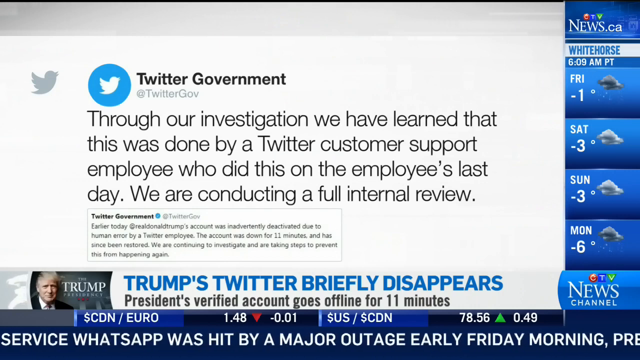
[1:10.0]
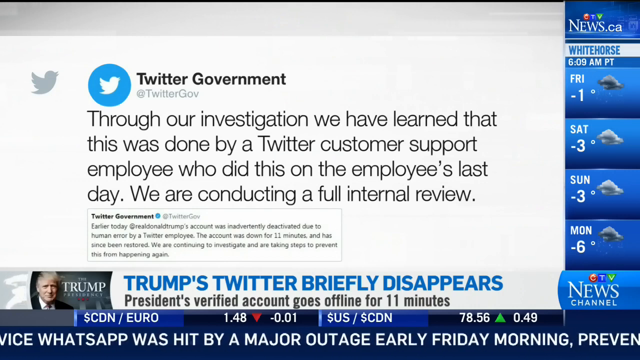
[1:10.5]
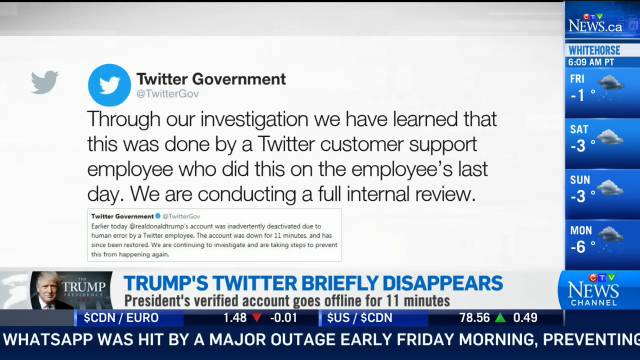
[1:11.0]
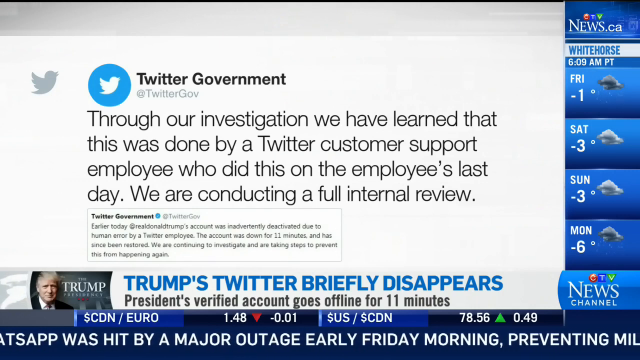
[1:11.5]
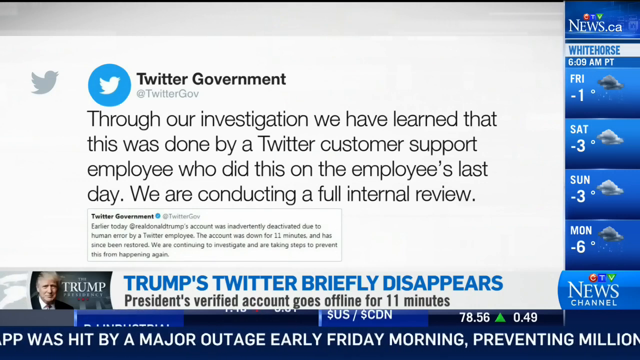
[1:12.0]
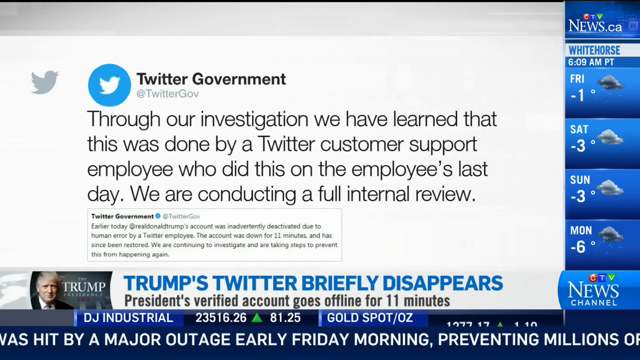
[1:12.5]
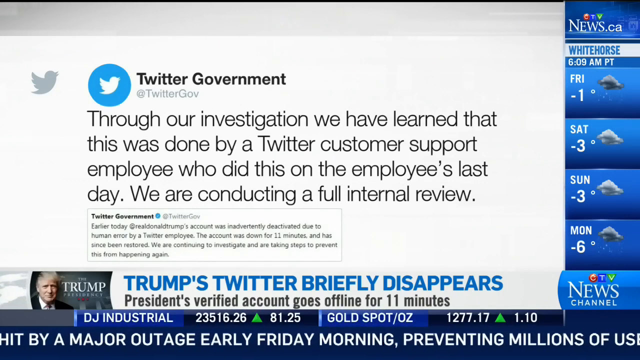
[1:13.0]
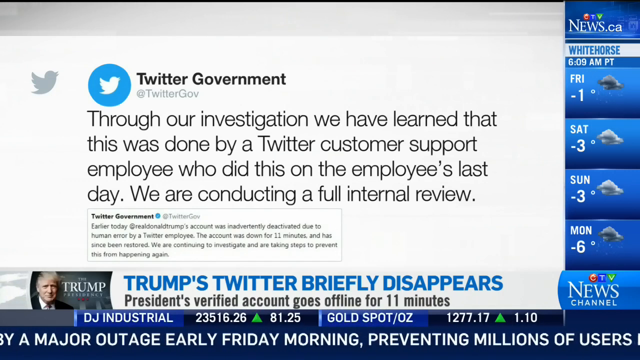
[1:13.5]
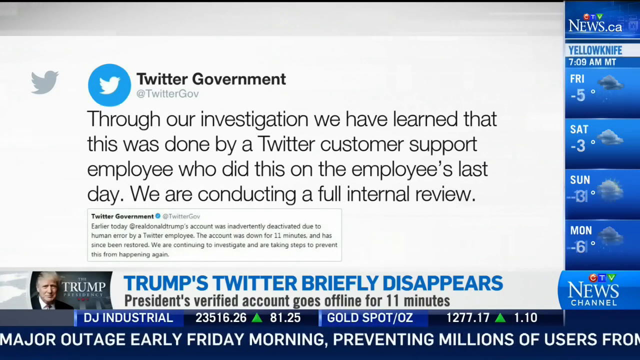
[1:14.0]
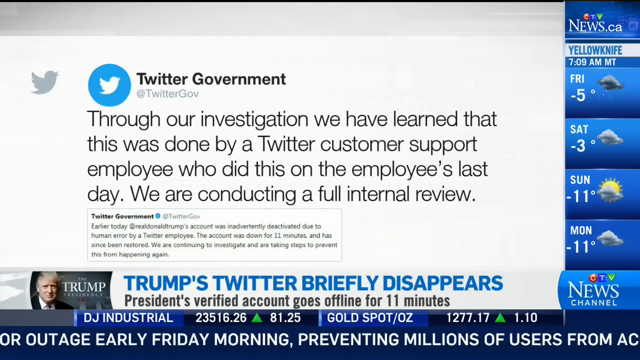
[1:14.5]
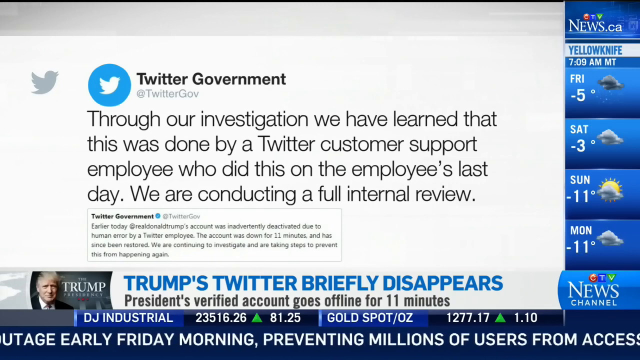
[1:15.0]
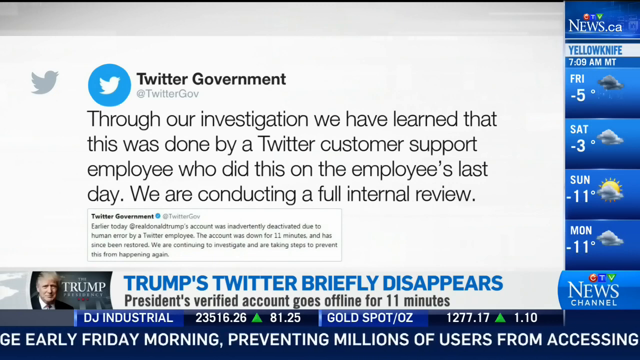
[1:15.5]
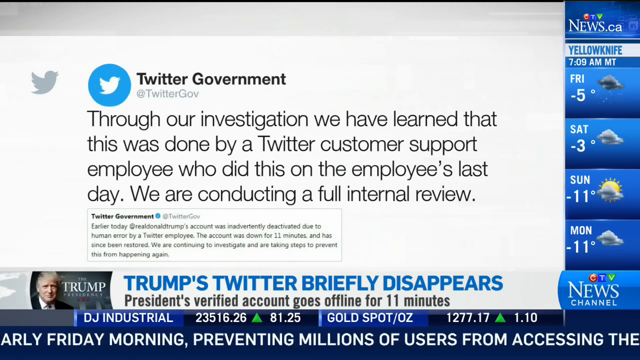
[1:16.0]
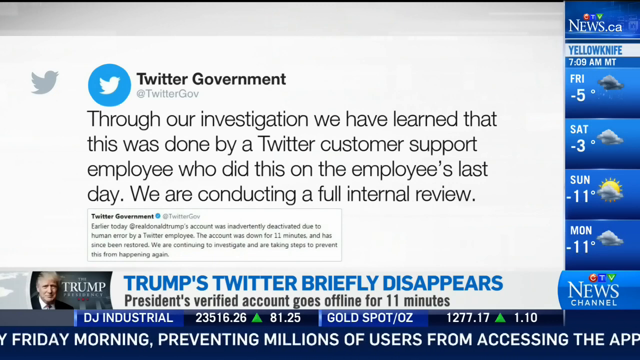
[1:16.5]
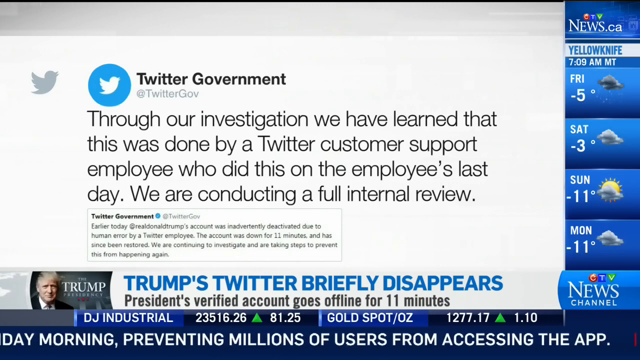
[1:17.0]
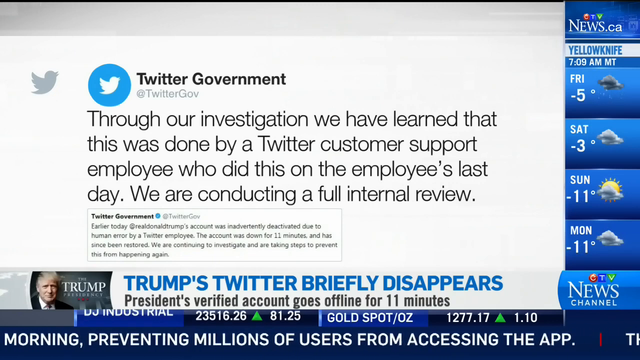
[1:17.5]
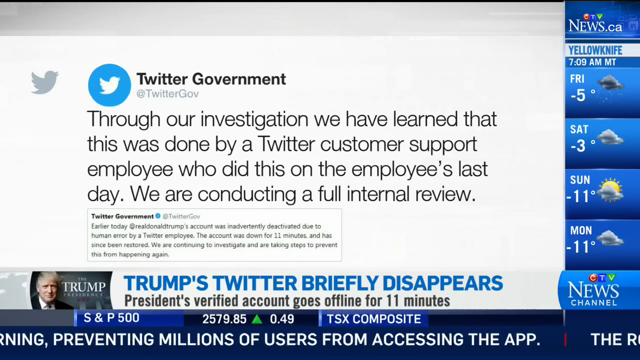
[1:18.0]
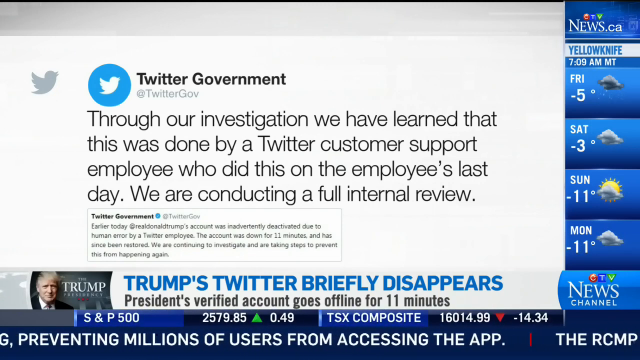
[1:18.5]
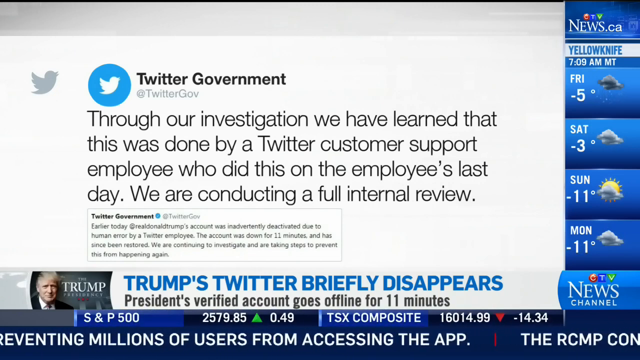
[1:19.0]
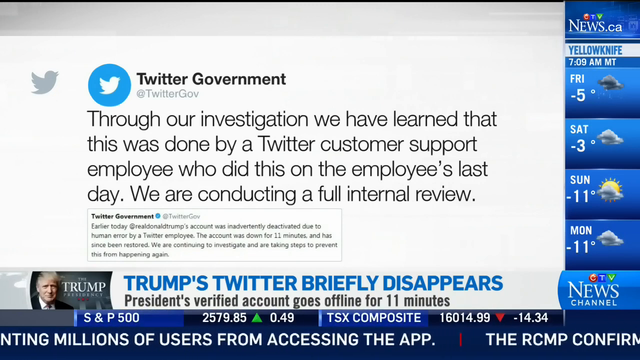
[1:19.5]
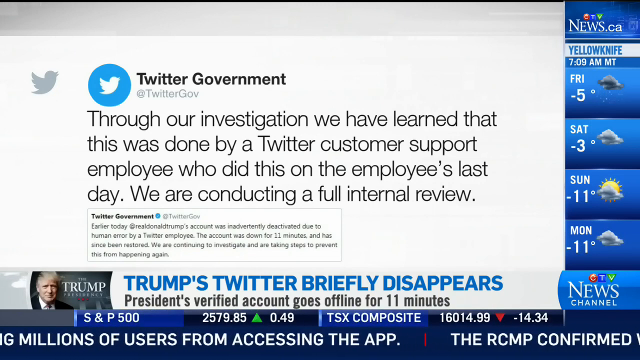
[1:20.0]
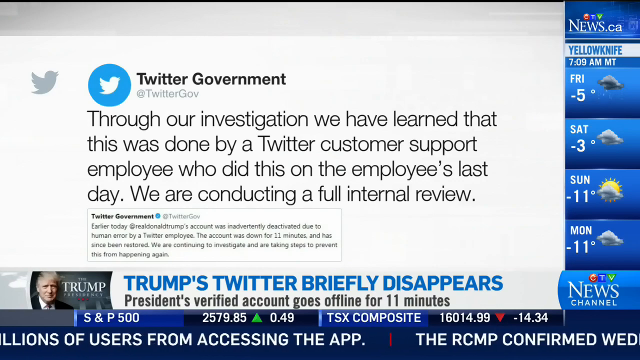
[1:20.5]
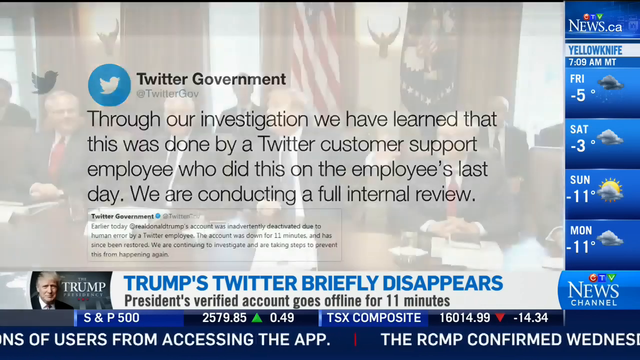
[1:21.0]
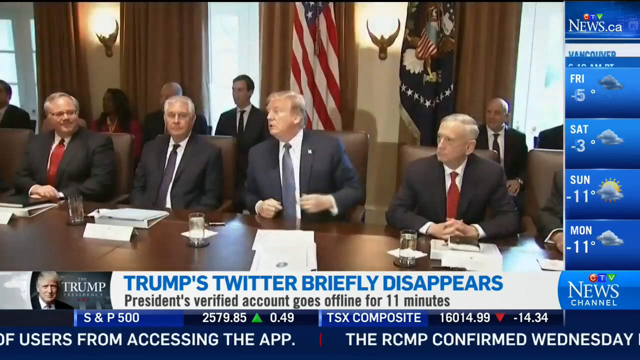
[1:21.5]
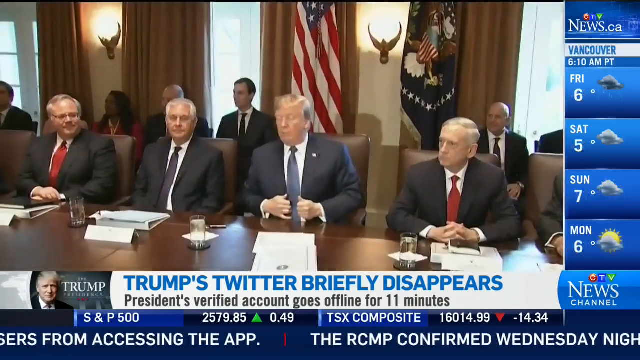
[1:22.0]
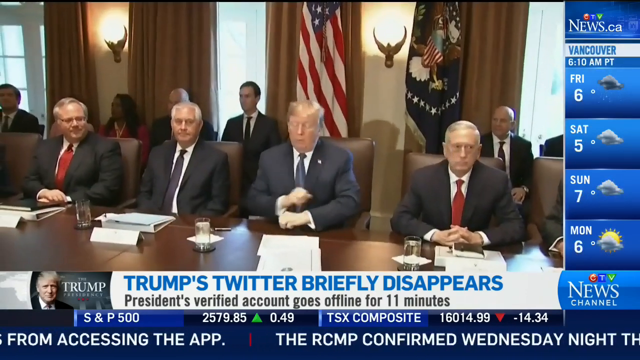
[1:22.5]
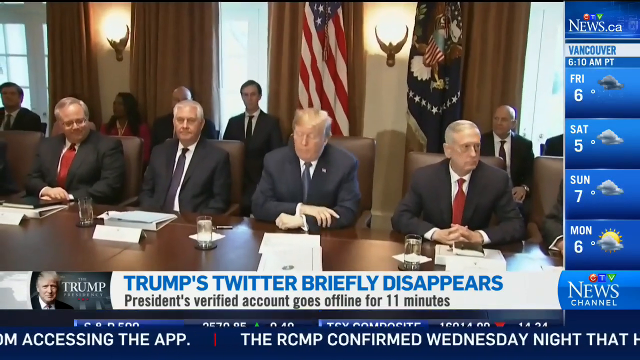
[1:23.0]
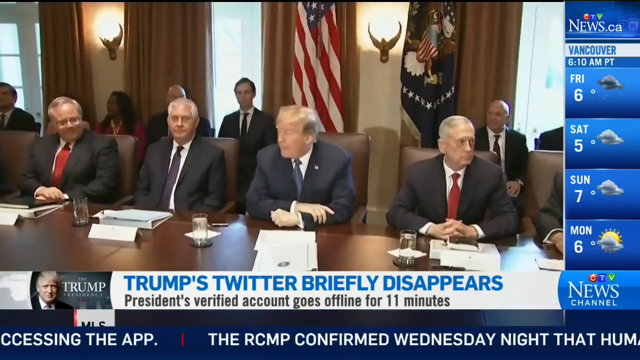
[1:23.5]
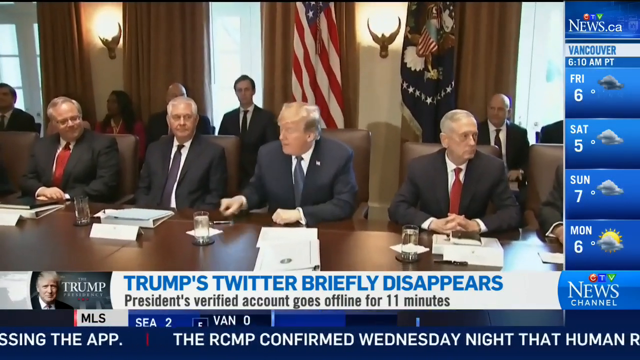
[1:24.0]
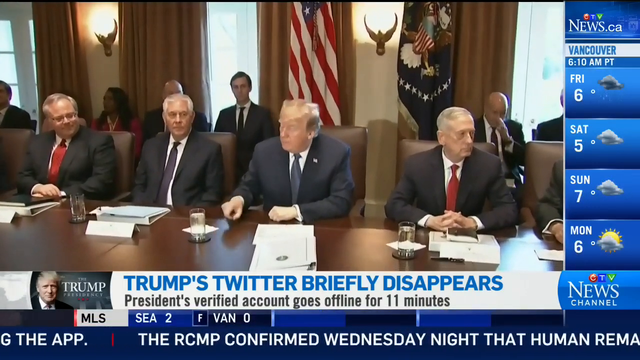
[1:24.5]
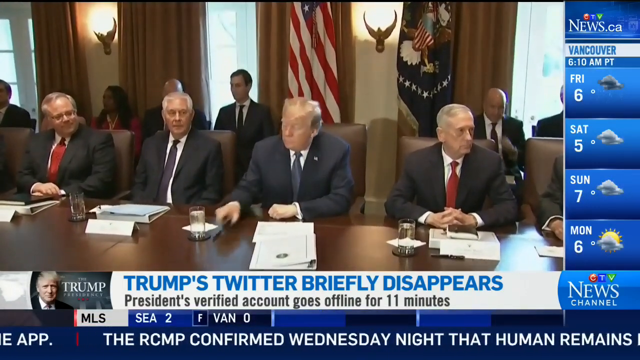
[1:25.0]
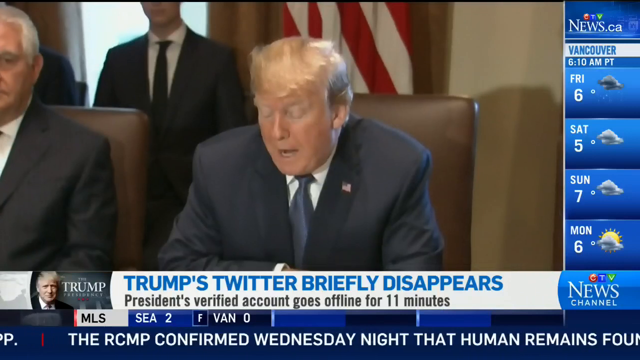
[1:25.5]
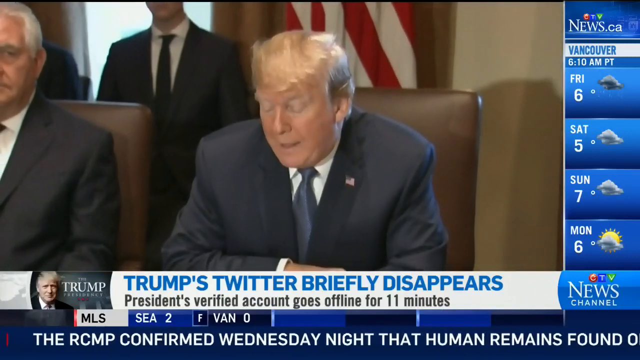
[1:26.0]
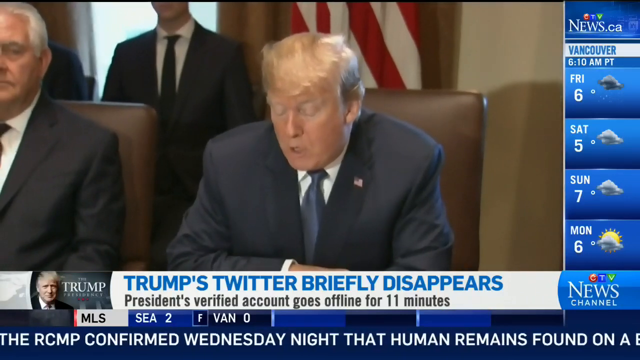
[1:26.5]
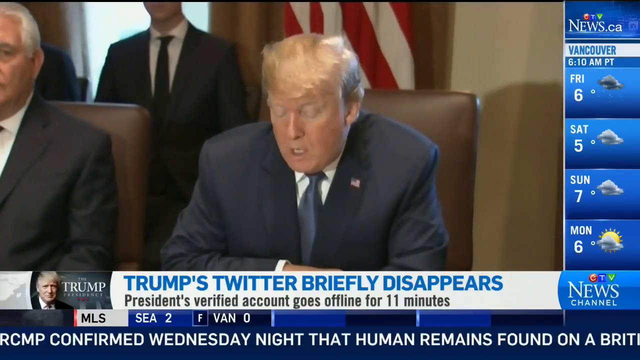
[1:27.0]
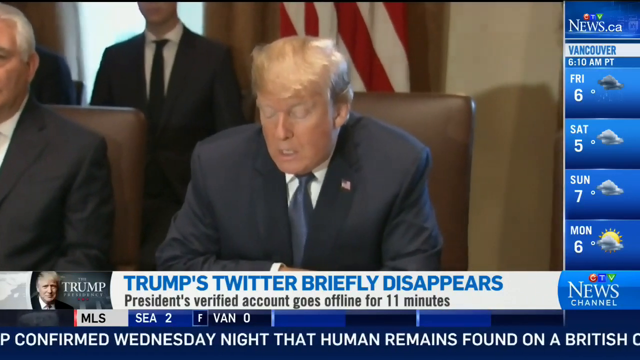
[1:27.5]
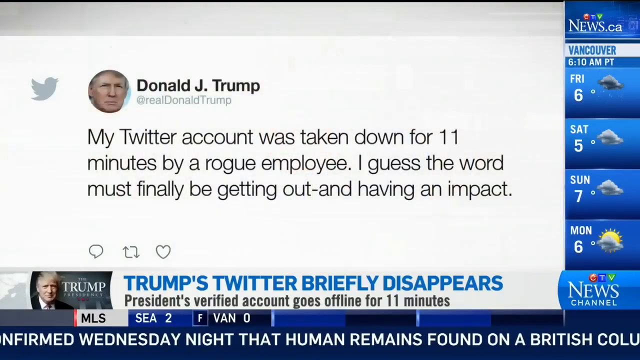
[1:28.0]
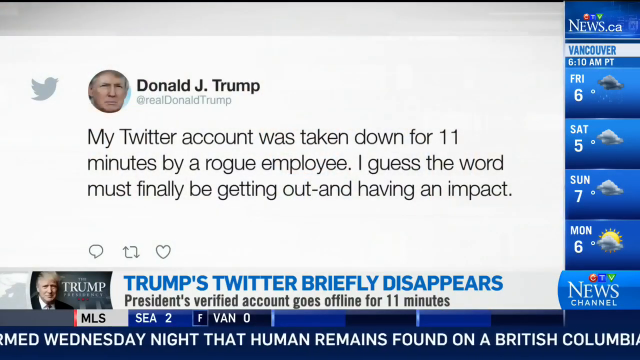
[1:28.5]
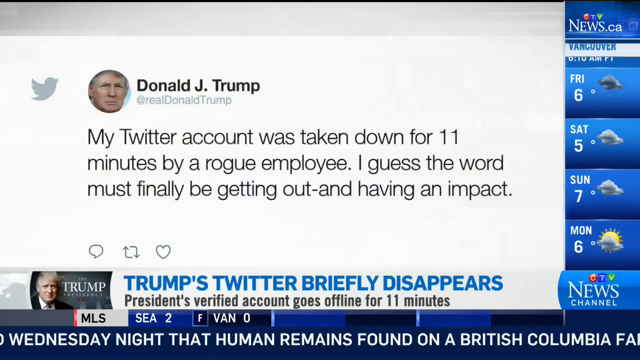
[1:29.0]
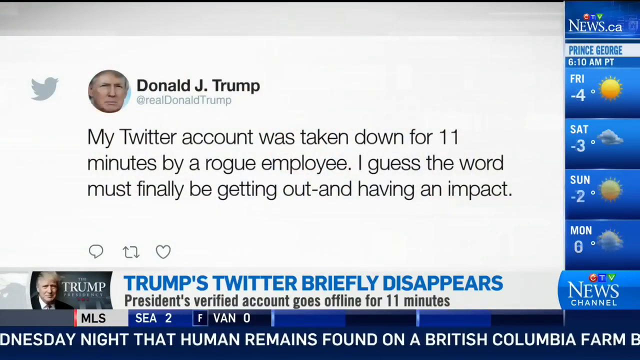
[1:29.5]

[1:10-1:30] The Twitter government statement about a full internal review of the employee who took down Trump's account is on screen. The video then moves to another room, where Donald Trump sits in a medium-brown leather chair among other men, one on his right and two on his left. All are in suits; Trump wears a black suit, a gray tie and a white shirt, with a United States flag pin on his lapel. He appears to be saying something. The room has brown curtains, and the American flag is prominent. The other men in the meeting are not identifiable. The segment ends with a tweet from Trump, showing his face in what is apparently the profile picture, which reads: "my Twitter account was taken down for 11 minutes by a rogue employee. I guess the word must finally be getting out and having an impact."